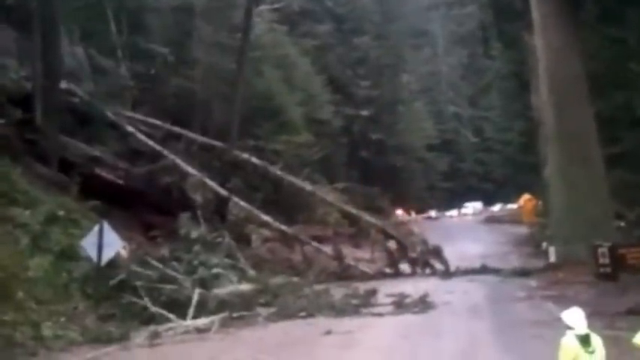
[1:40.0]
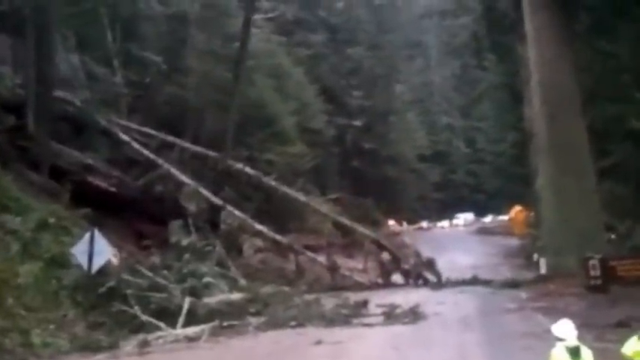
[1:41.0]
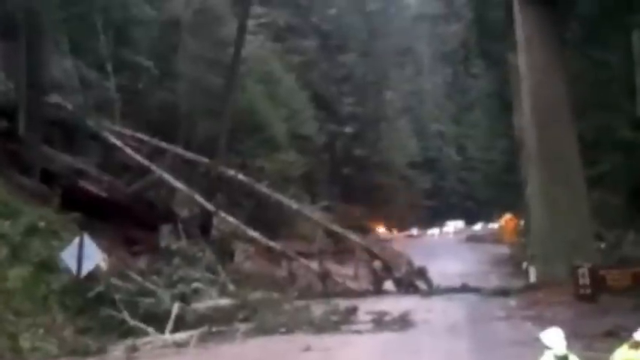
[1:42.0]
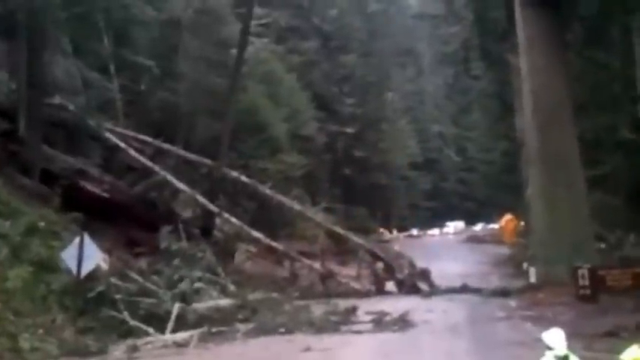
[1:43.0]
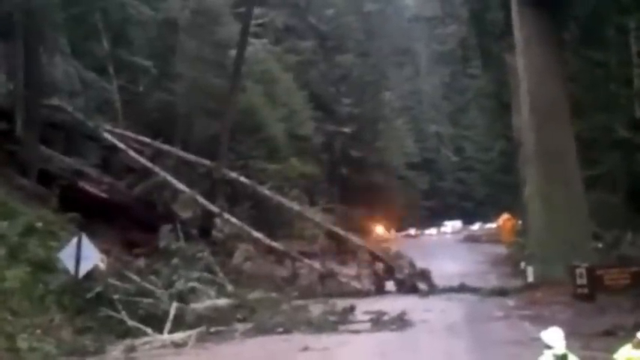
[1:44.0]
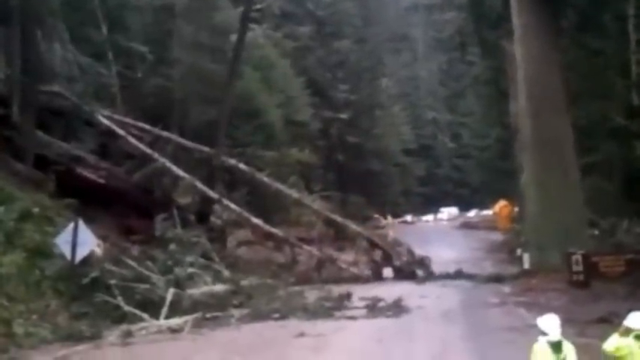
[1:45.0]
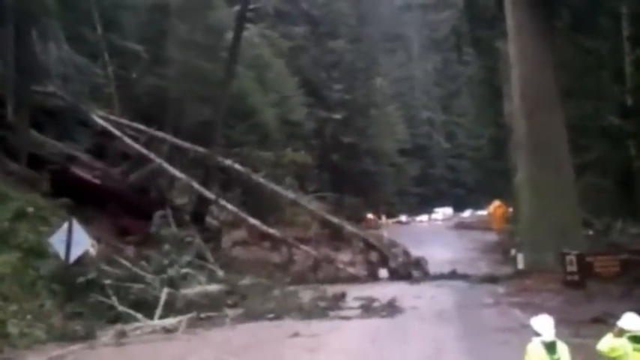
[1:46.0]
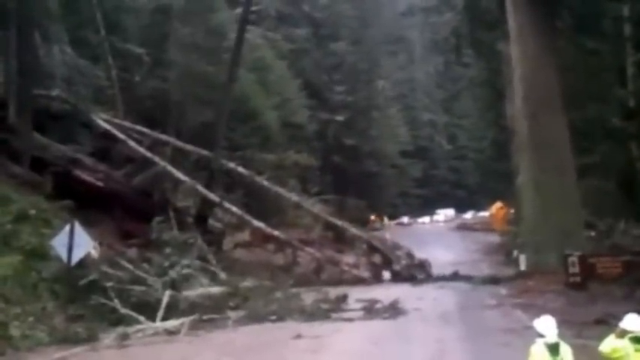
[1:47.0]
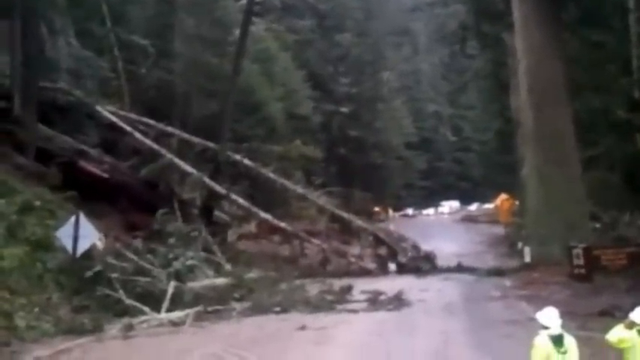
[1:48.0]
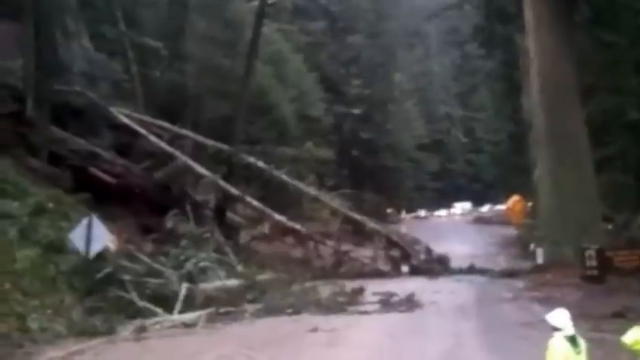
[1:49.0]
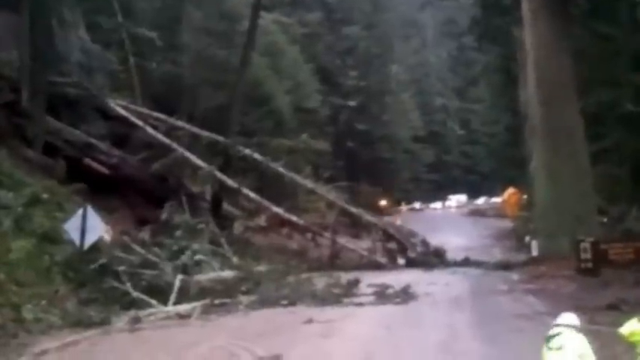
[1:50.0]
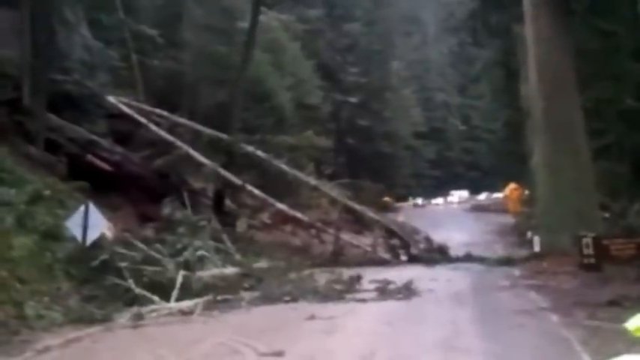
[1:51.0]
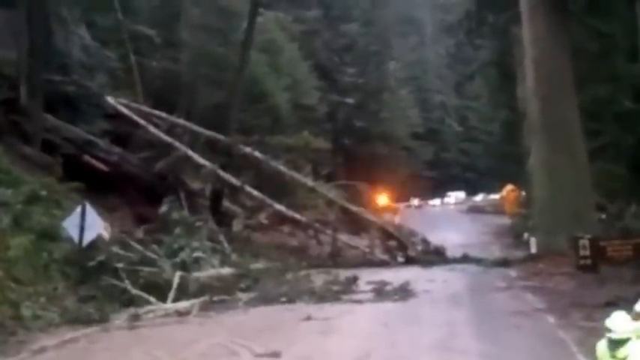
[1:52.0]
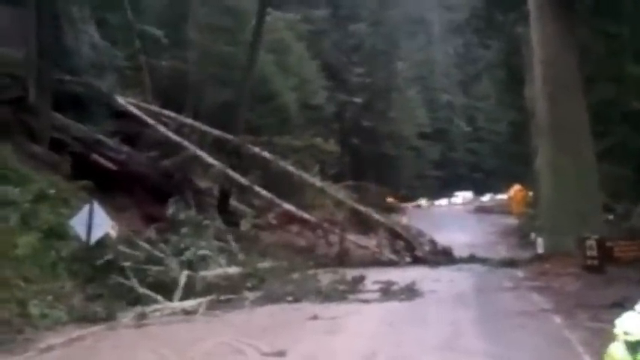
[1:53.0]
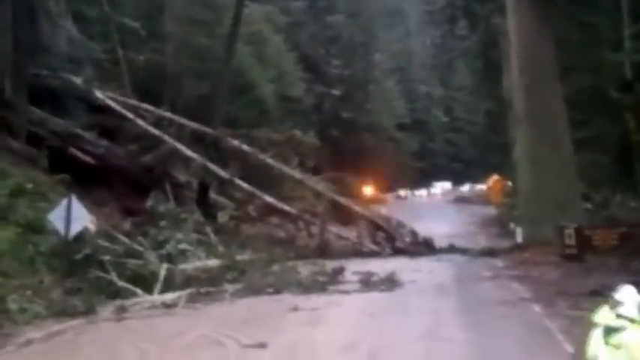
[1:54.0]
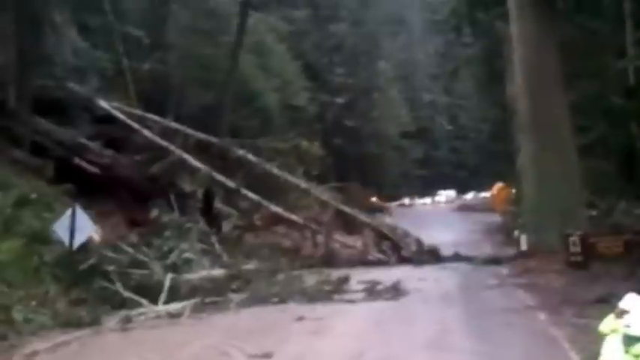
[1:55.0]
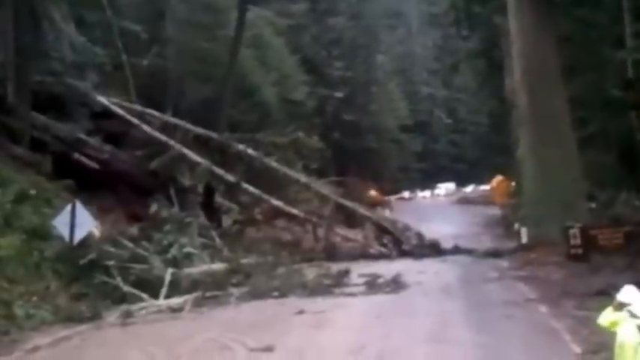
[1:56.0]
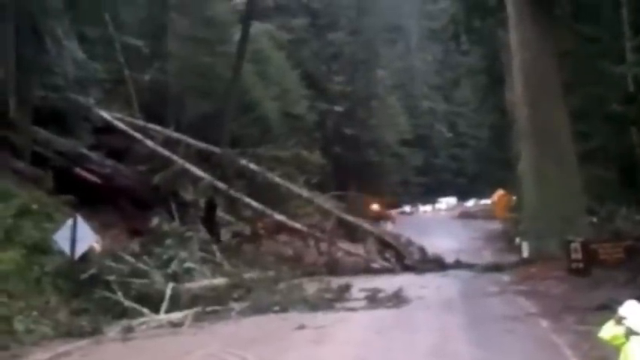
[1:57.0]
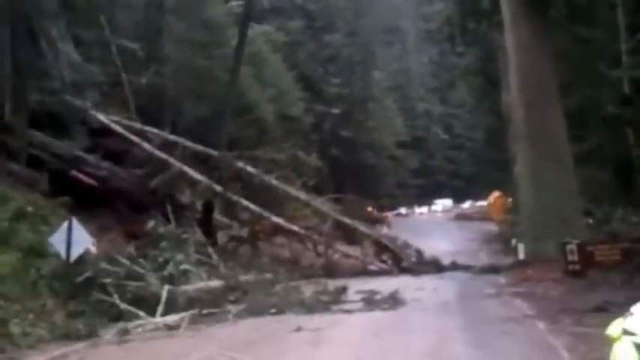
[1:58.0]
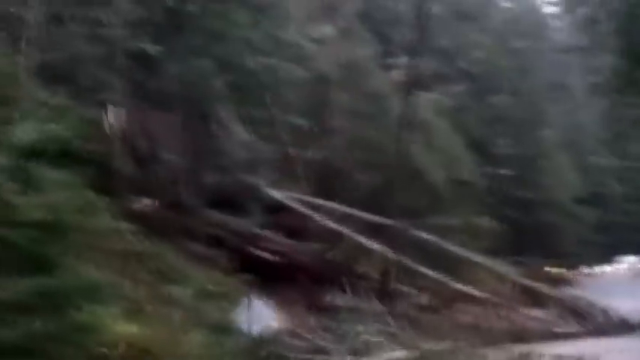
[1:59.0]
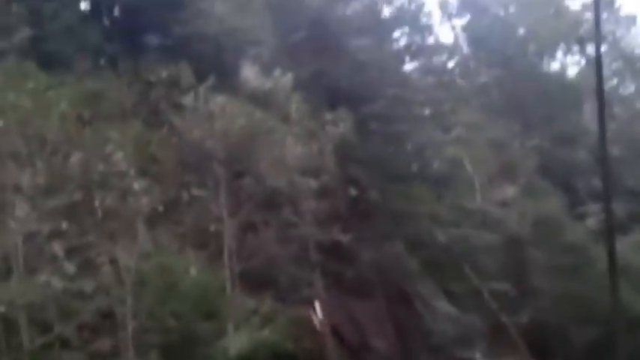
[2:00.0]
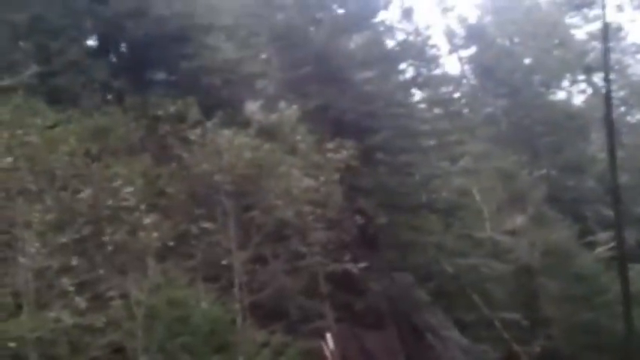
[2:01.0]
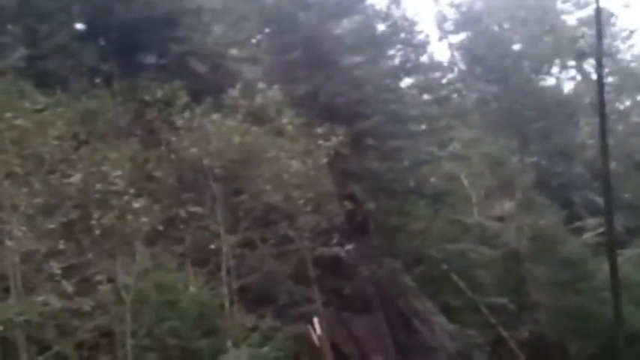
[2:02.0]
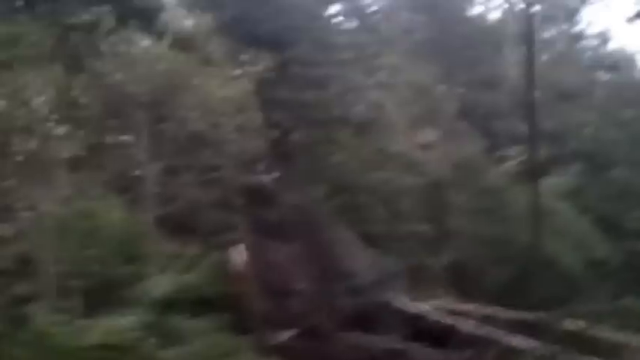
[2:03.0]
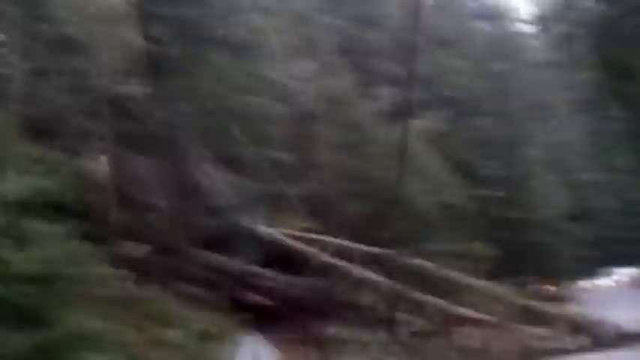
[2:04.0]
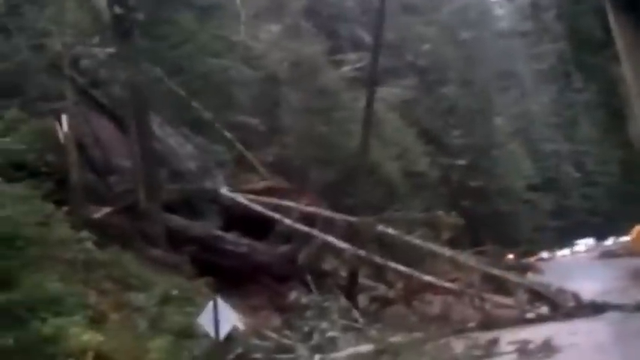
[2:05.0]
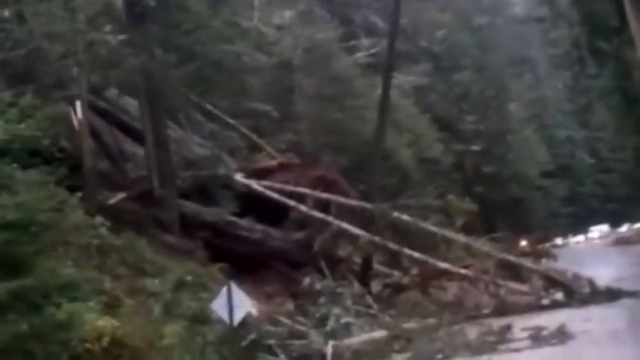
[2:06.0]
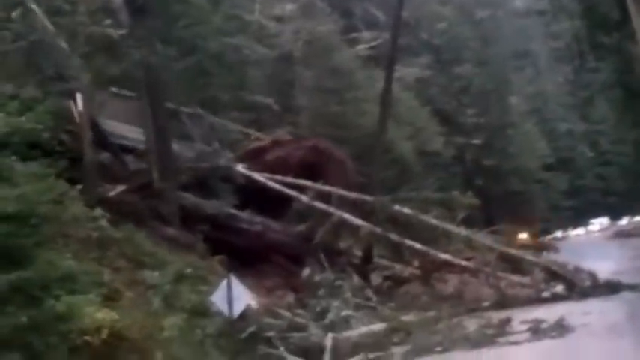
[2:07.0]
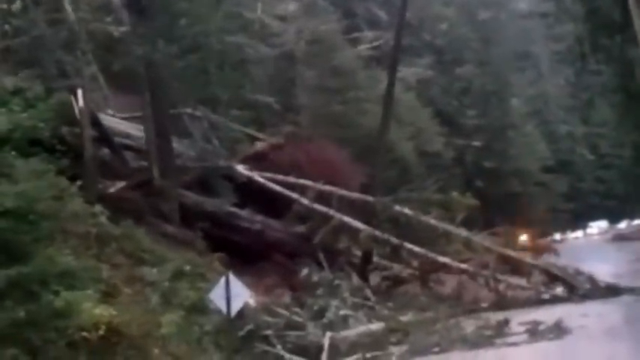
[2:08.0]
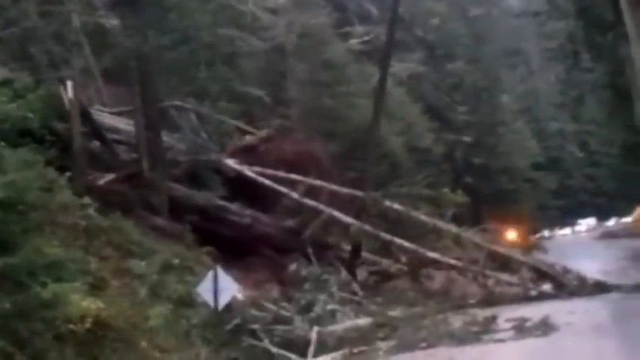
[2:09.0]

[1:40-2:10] Trees slide forward, as if in an earthquake, all the way to the opposite side of the road. At the end of the road an orange siren light is flashing, with other cars near it, apparently parked to block off the road. A tree continues to slide forward. People are around but far enough away not to be affected. Behind the sliding, falling tree, something else appears to be collapsing. In the right corner, a person in a white helmet stands in place observing the scene, not moving any closer.